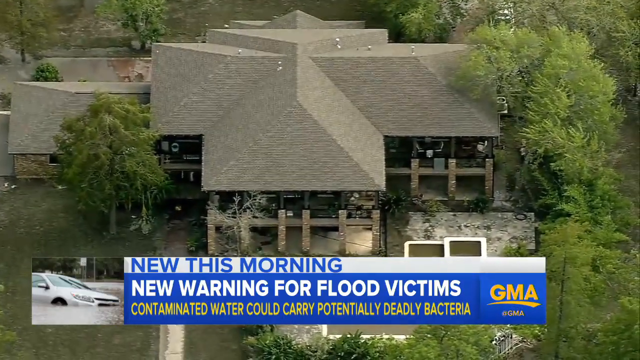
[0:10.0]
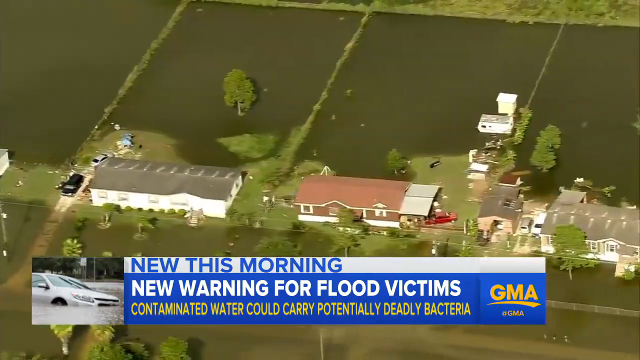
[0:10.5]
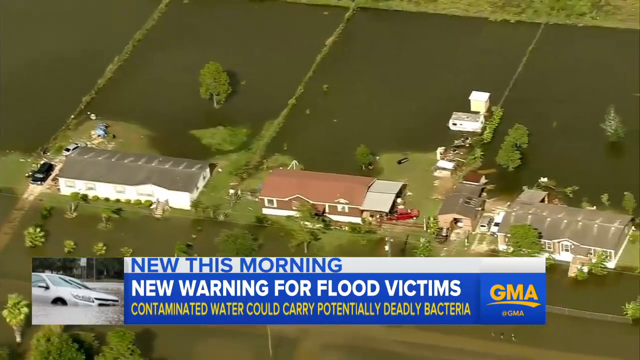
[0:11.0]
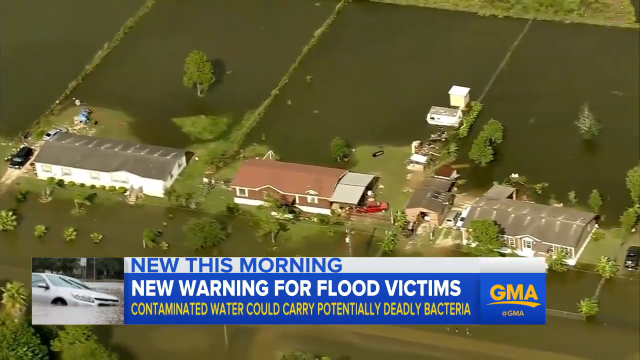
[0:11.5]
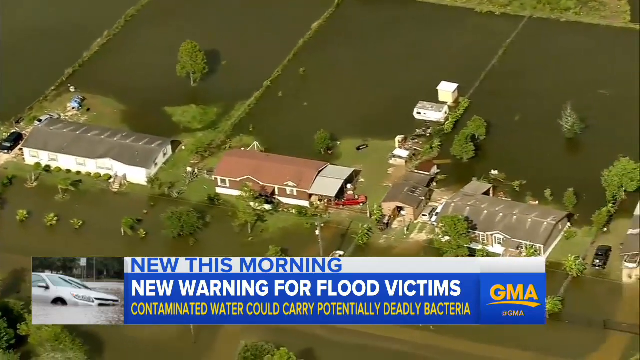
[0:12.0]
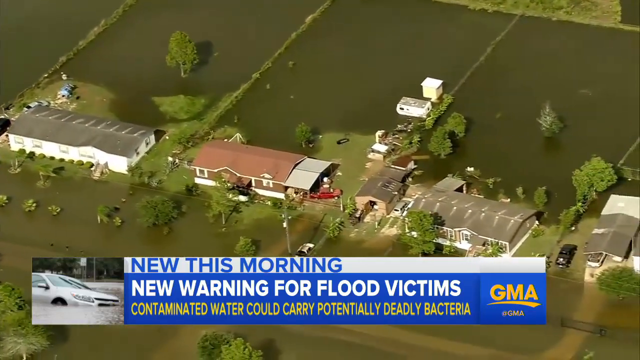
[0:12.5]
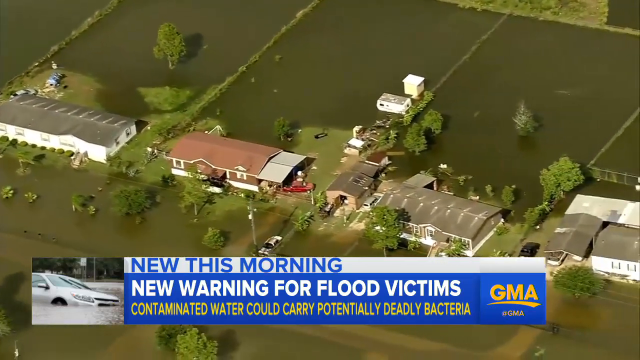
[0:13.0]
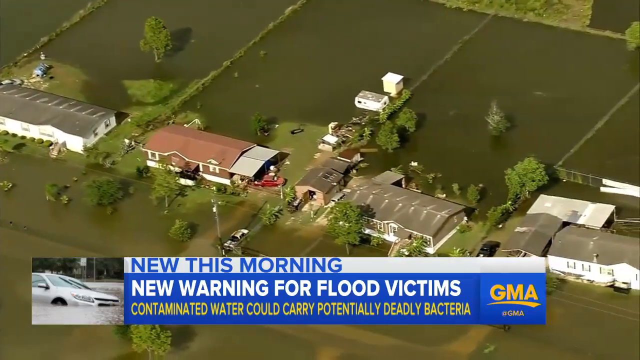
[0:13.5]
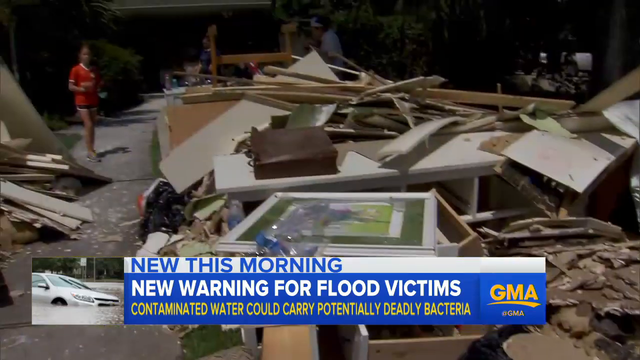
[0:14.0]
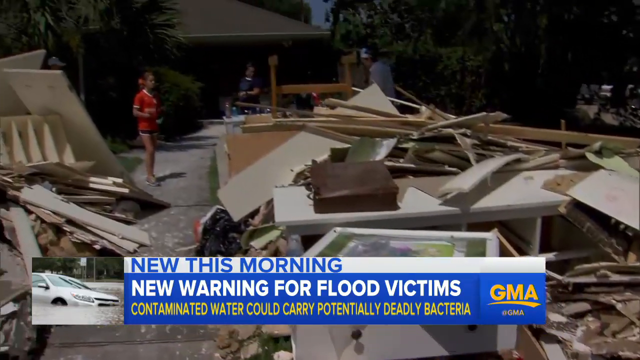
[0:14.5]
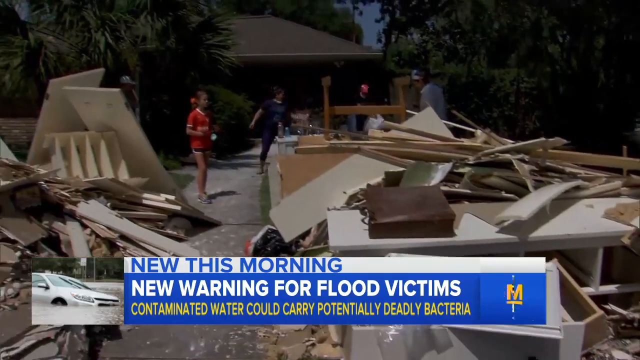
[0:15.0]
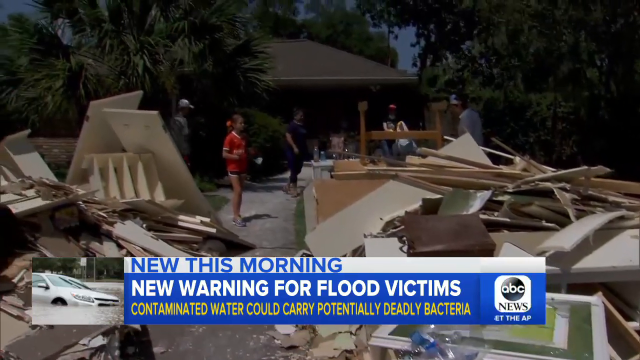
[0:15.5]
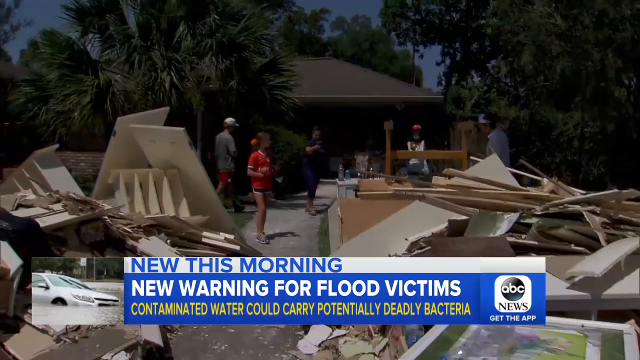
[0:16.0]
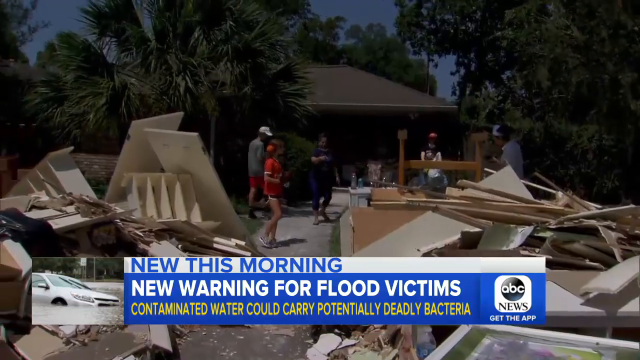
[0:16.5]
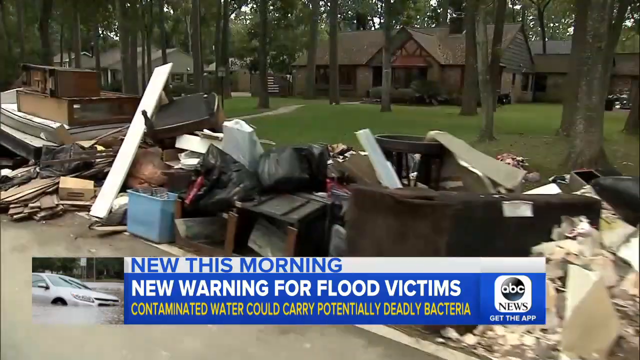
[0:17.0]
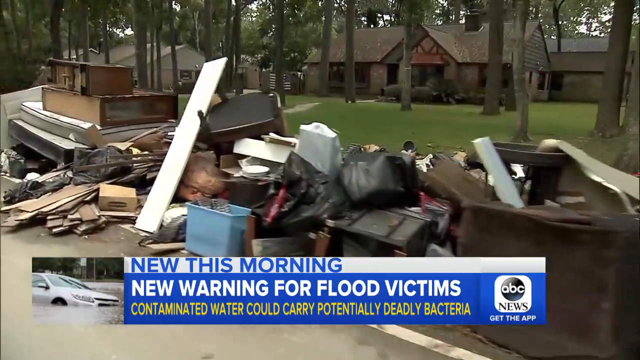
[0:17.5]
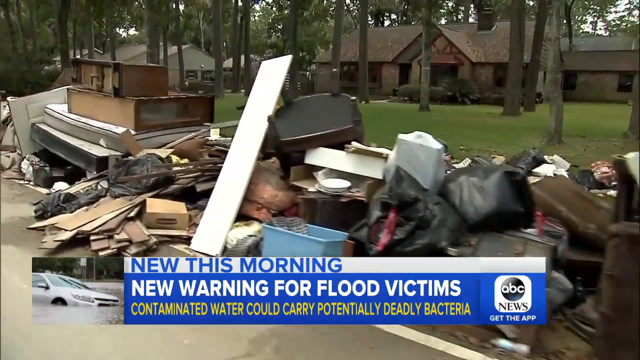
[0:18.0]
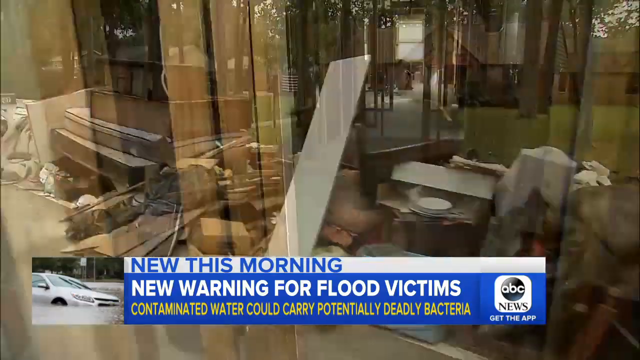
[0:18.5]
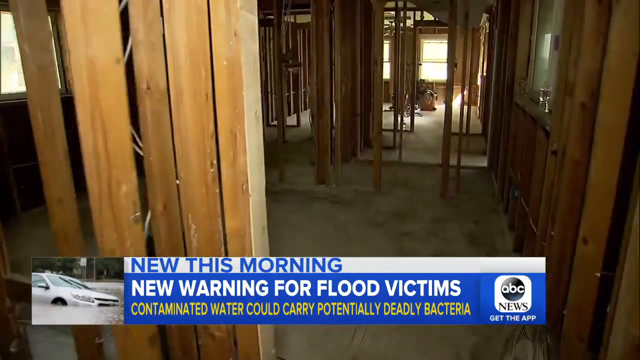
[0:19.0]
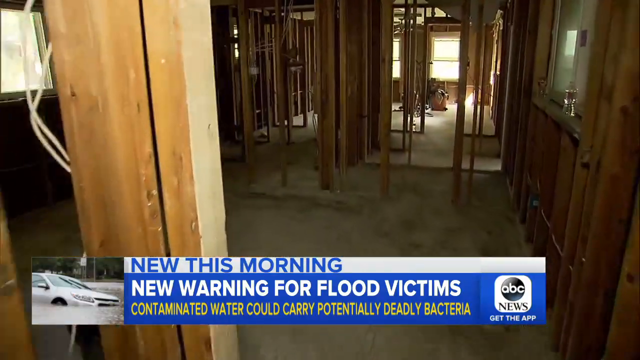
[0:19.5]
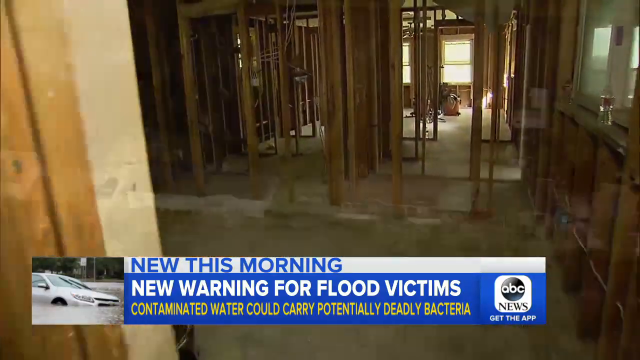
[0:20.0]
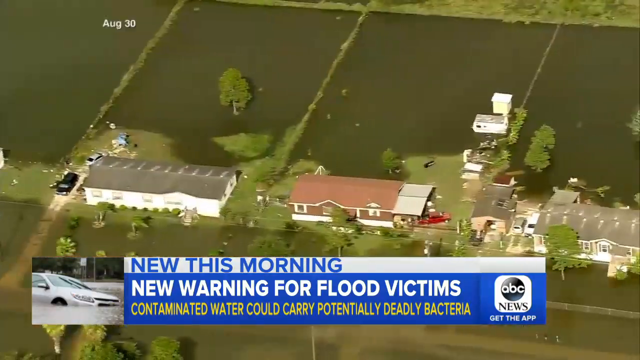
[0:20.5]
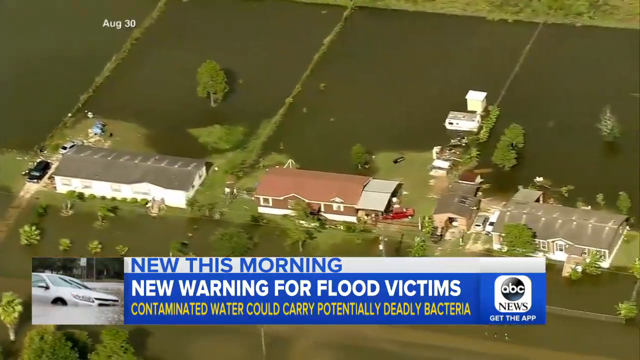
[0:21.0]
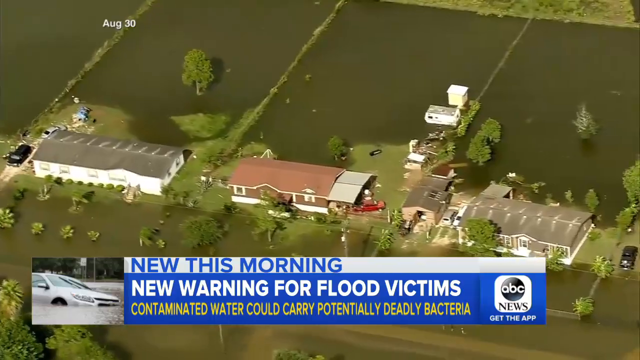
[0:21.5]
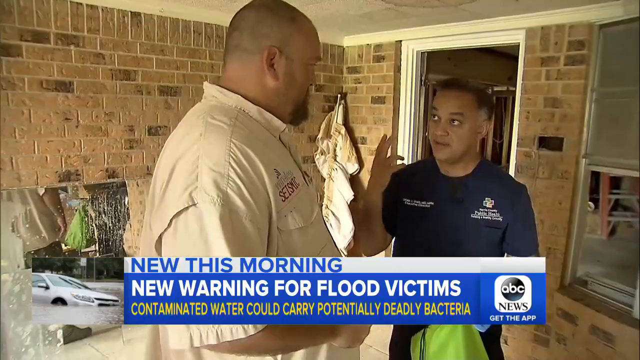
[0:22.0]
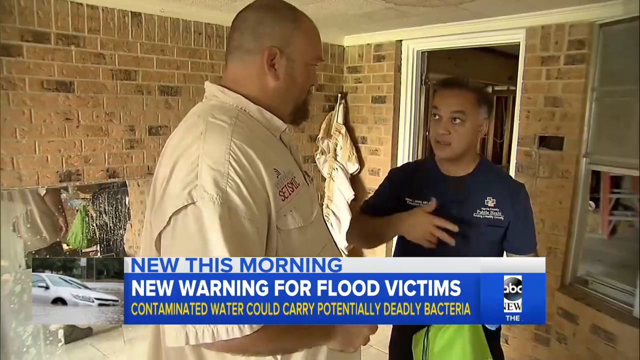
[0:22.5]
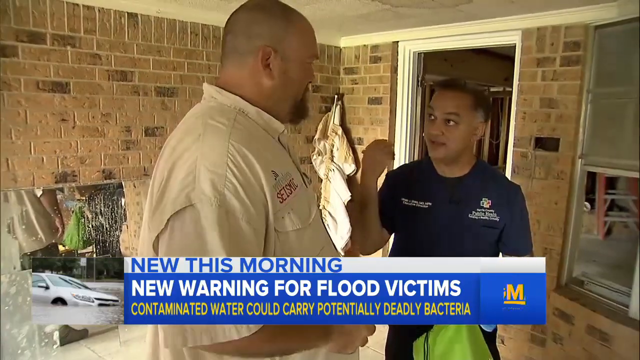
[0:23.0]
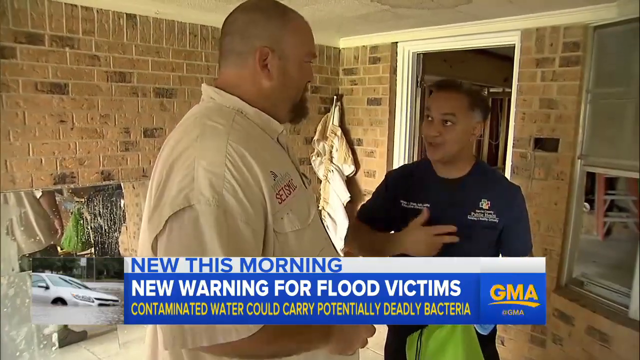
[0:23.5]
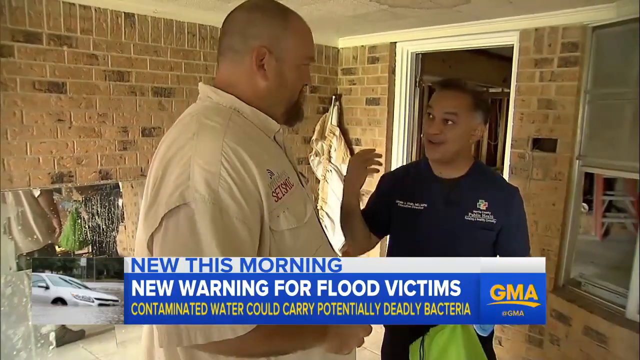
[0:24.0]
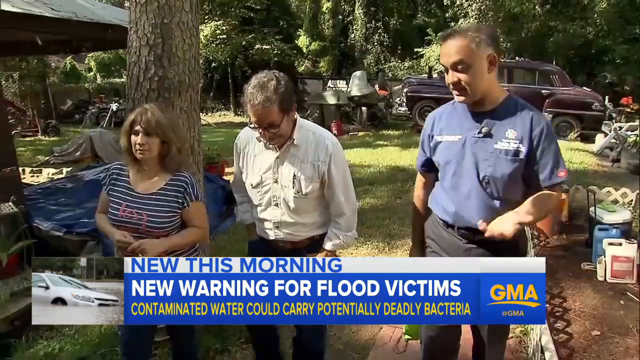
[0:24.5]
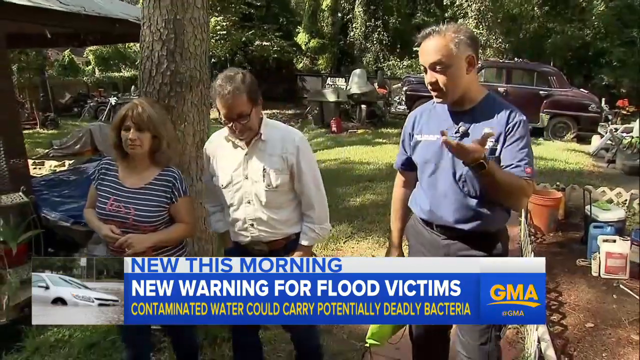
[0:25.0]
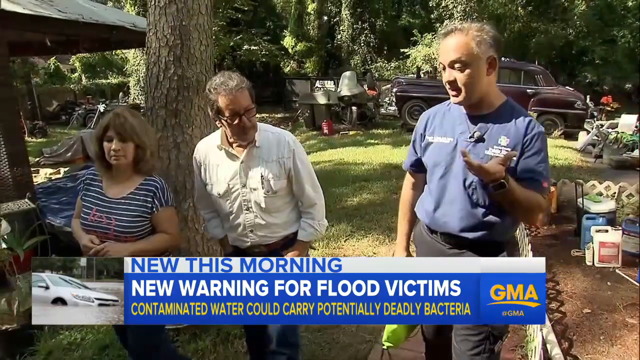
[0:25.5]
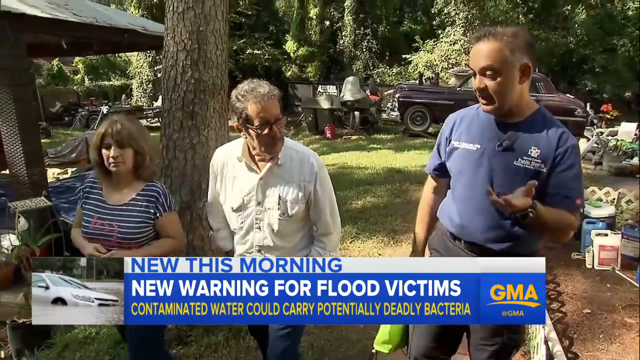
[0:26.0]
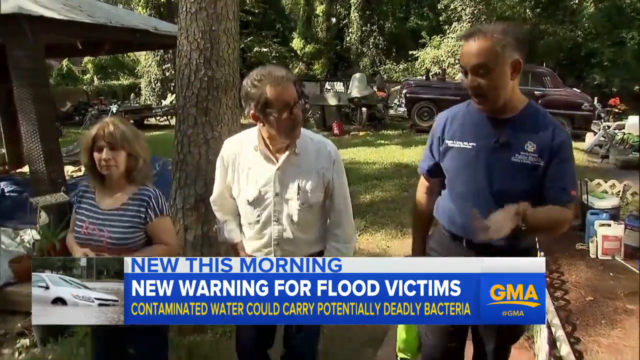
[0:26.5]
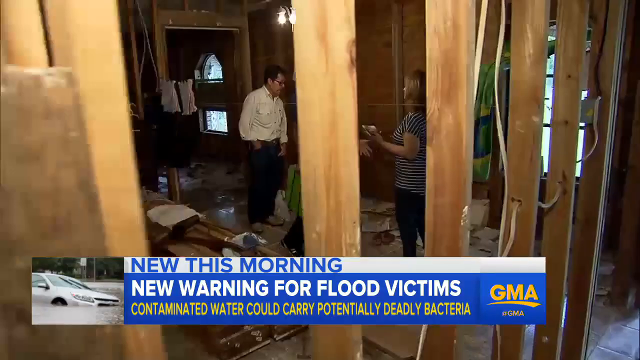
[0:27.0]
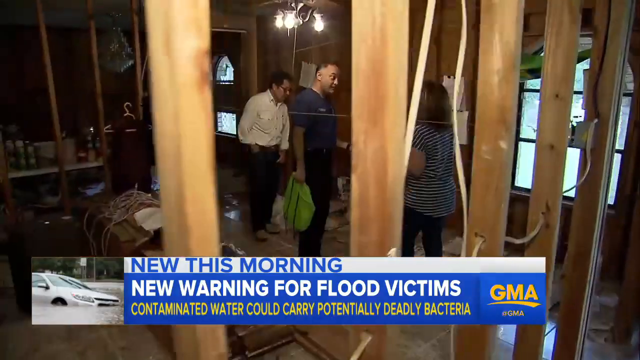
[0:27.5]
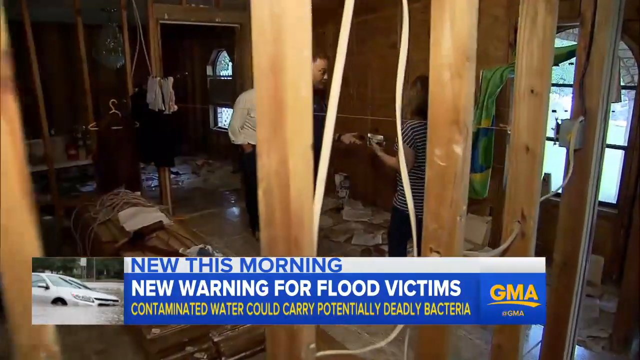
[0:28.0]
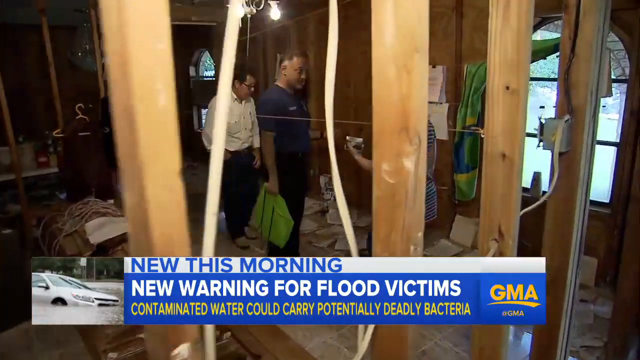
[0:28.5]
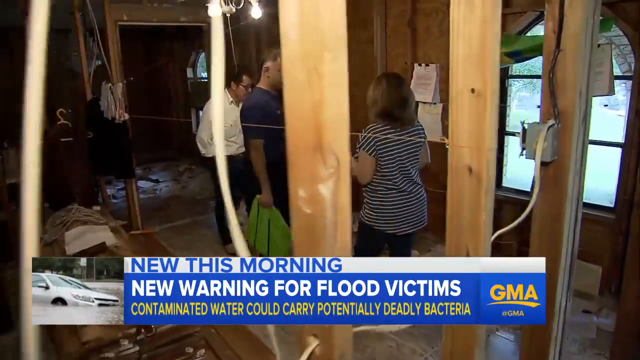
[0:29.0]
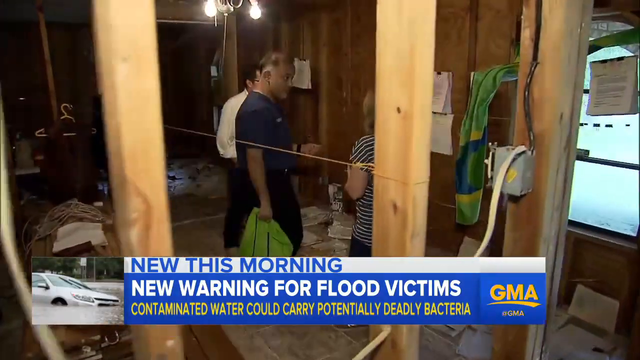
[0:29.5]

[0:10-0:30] This Good Morning America news report concerns a danger to flooding victims. Various scenes of a flooded residential area appear throughout, and a text bar at the bottom of the screen reads, "New this morning. New Warning for Flood Victims. Contaminated water could carry potentially deadly bacteria." The GMA logo is on the right side. The views include an aerial shot of a large flooded residential area and a large pile of debris in the driveway of a home as family members walk around it and sort through it. The camera goes down a residential street with houses in the background, where piles of debris, including furniture, construction debris and garbage bags, run completely down the street. Several views follow of the interior of a home that has been gutted down to its frames. A man in a blue shirt walks around the home speaking to a couple, a man and a woman; he is seen both outside the home and inside it, where it has been stripped down to the beams.